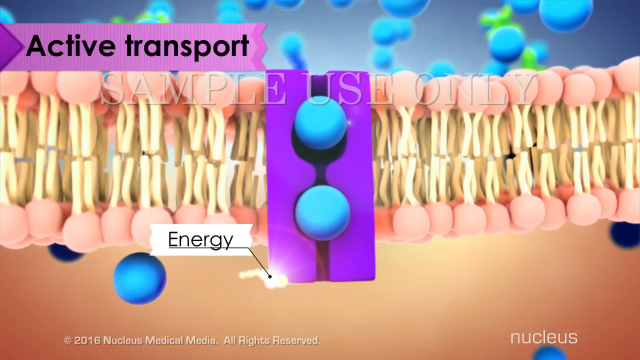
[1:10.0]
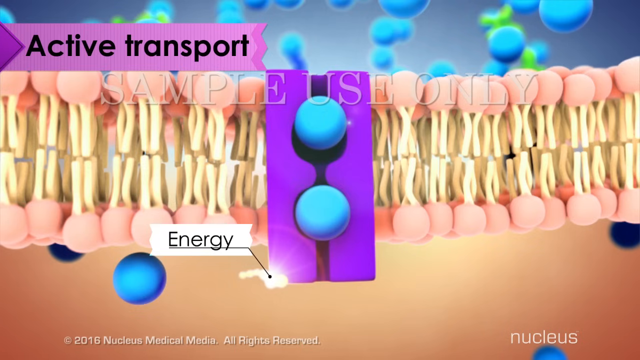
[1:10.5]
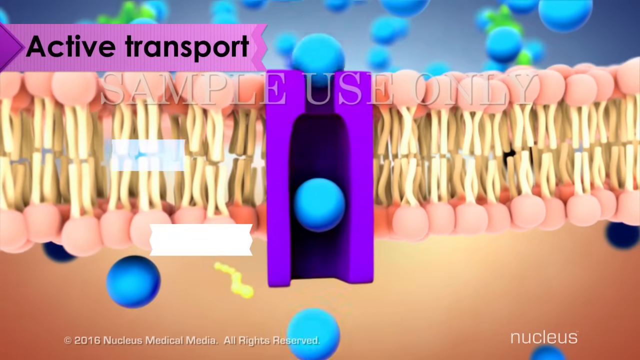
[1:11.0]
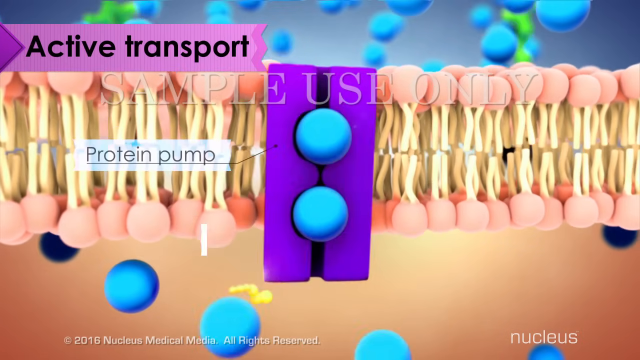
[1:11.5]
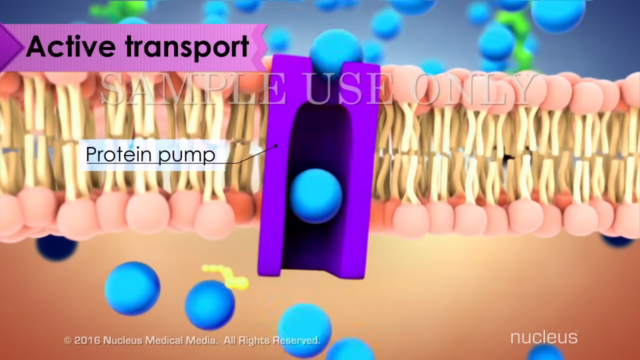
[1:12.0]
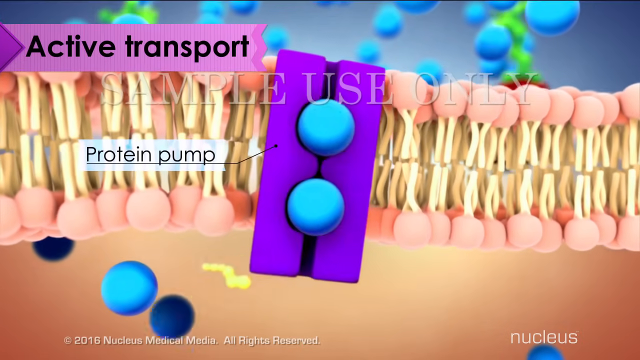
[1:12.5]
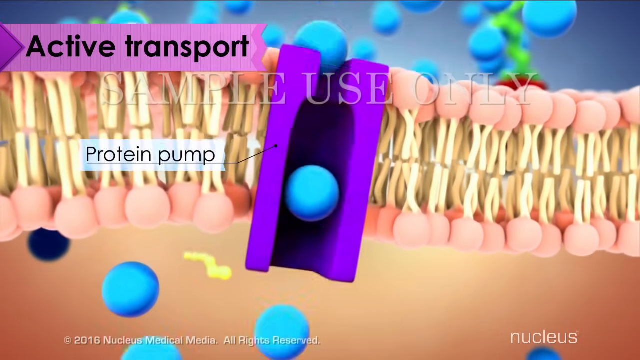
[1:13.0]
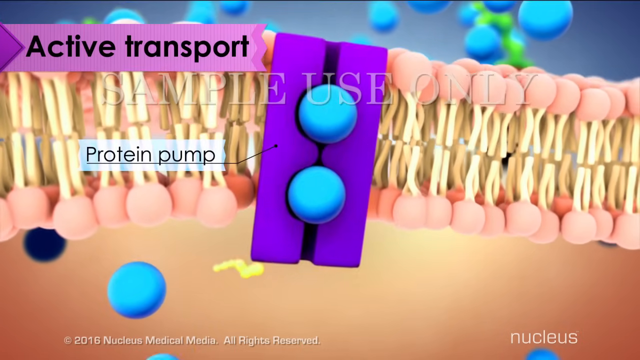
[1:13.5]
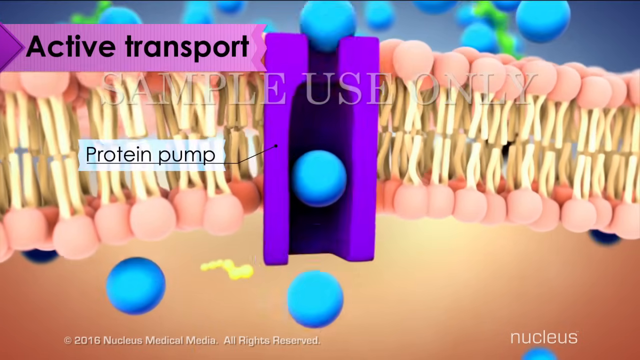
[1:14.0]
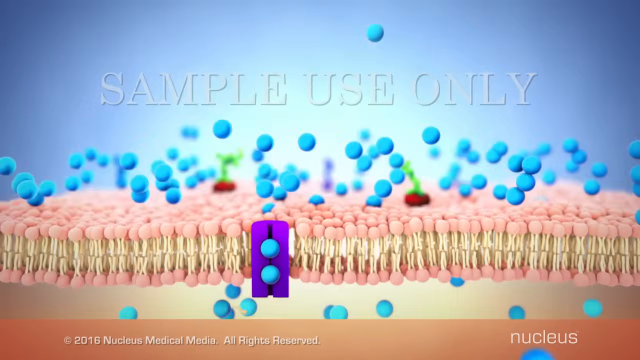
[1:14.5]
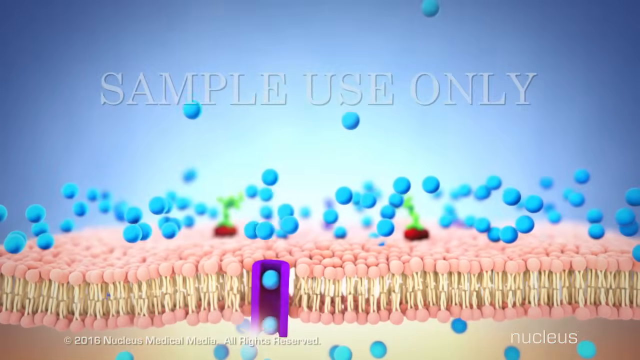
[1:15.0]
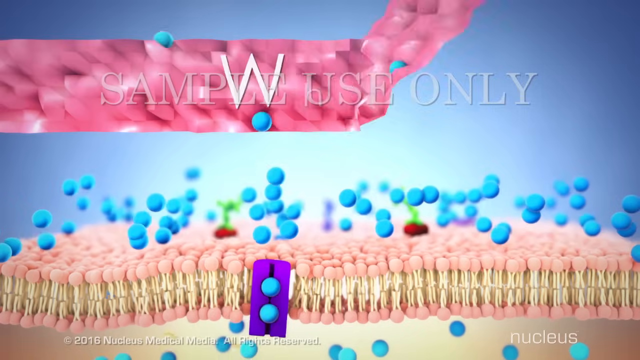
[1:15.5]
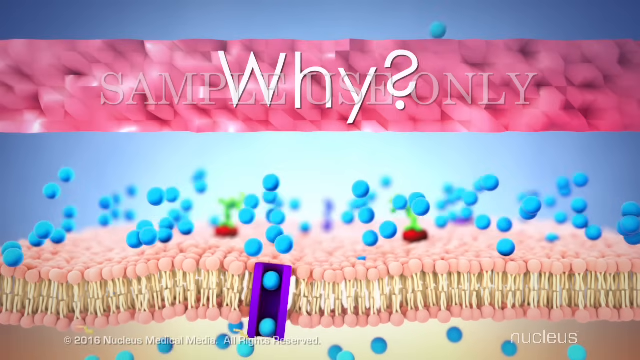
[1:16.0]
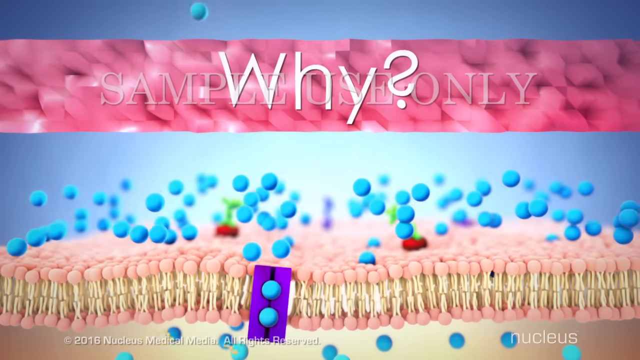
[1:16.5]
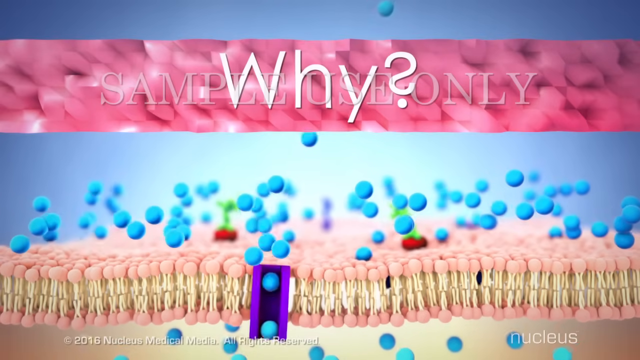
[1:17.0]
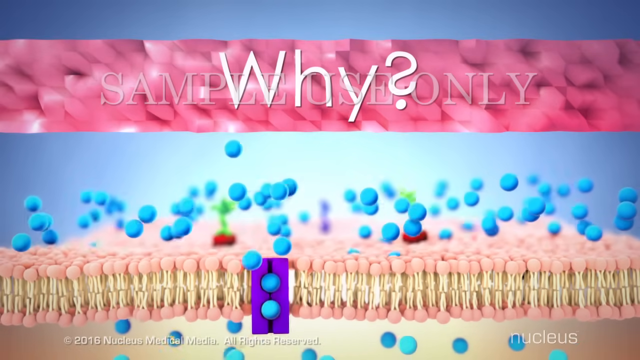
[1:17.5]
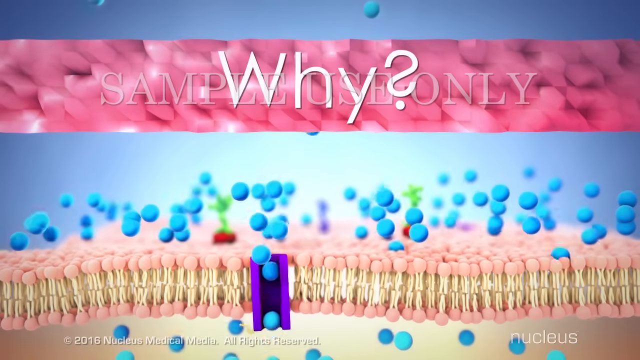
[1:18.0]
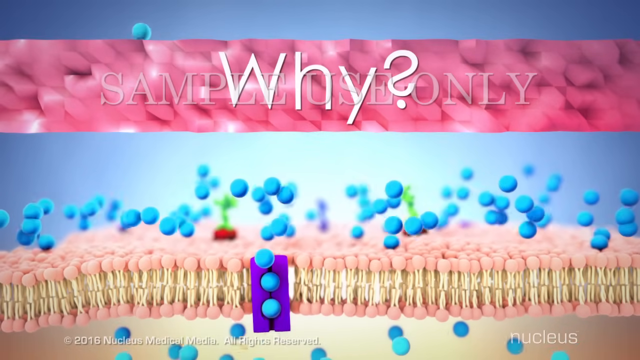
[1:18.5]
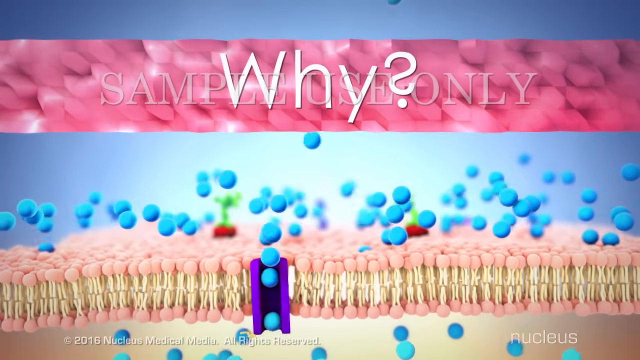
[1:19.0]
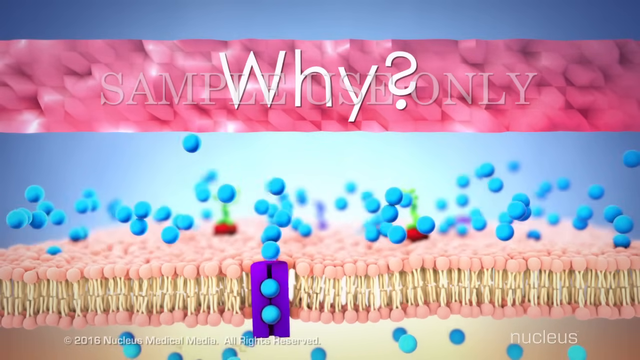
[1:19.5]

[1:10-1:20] The purple thing embedded in the cell membrane is shown to be a protein pump. Blue molecules keep passing through the protein pump one by one, and each time a blue molecule goes in, energy, represented by a squiggly yellow line, touches the ends of the protein pump from the inside. The video then zooms out, and a pink banner appears with the word "why?" on it. The scene stays very dynamic: the blue molecules outside the cell membrane are kind of jumping, bouncing on top of it, while the protein pump keeps working and molecules keep passing through it.